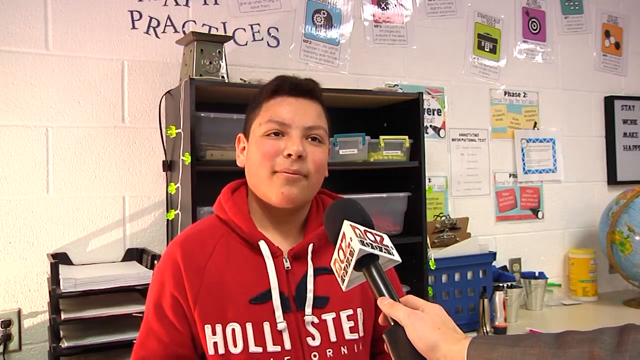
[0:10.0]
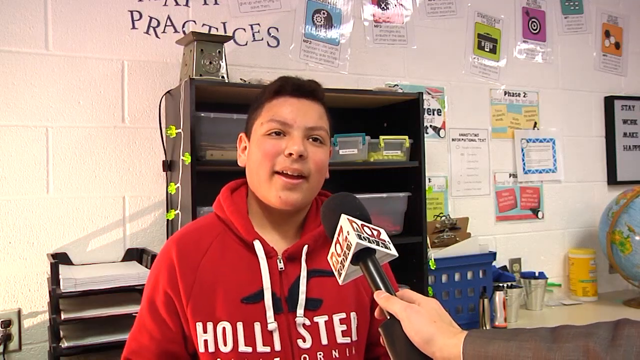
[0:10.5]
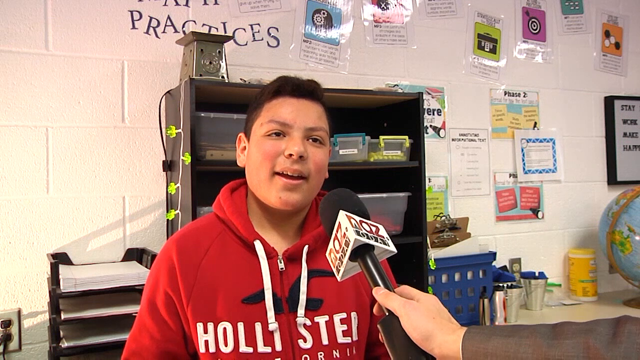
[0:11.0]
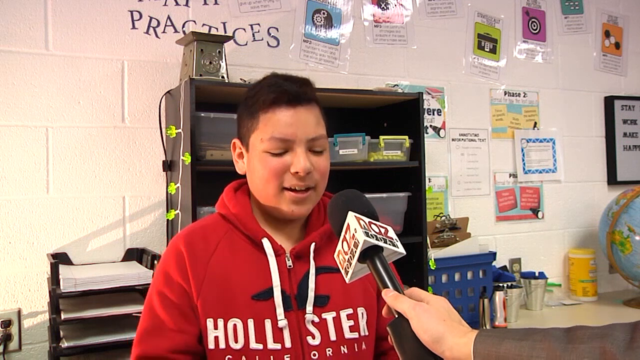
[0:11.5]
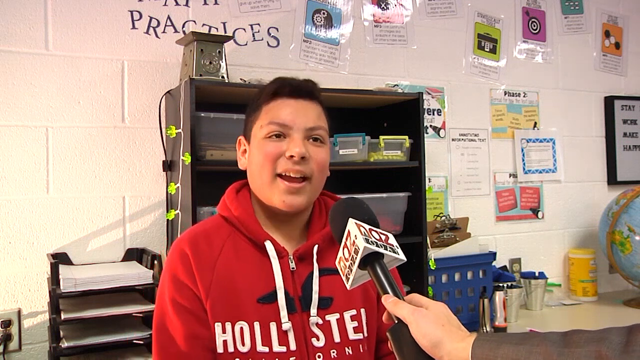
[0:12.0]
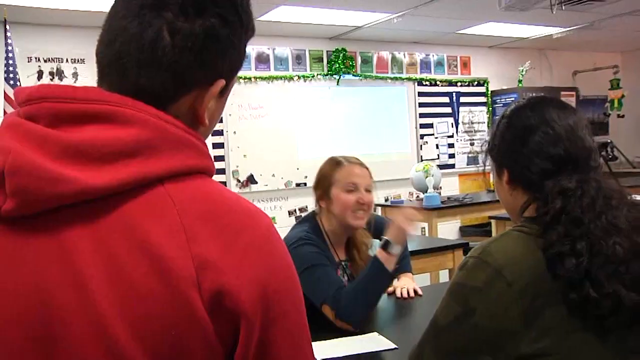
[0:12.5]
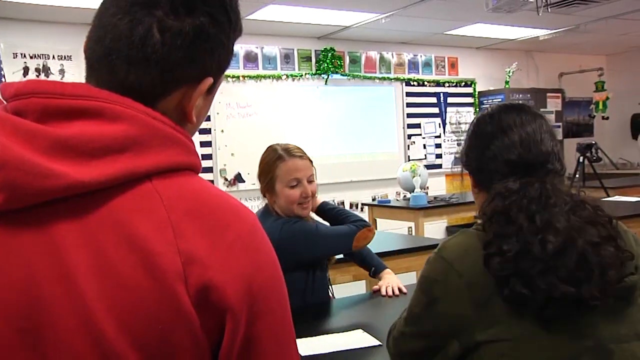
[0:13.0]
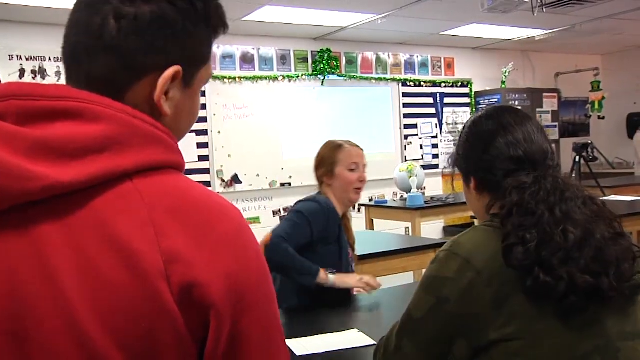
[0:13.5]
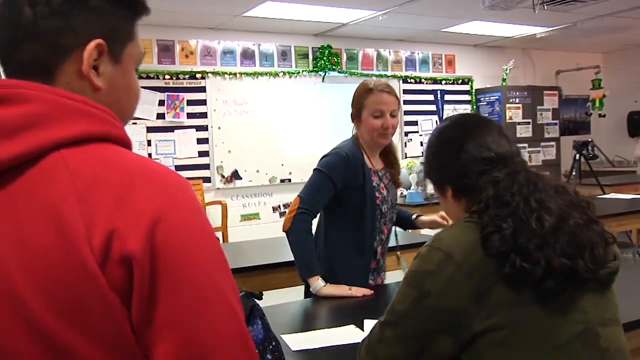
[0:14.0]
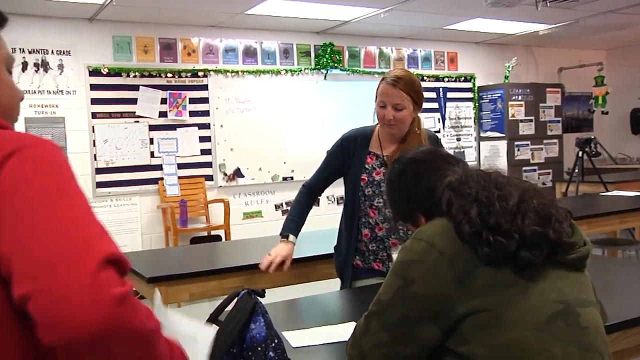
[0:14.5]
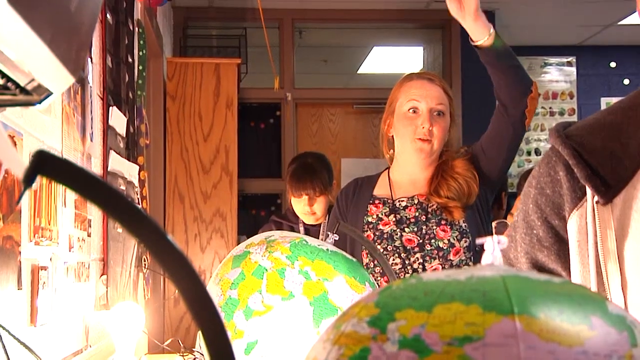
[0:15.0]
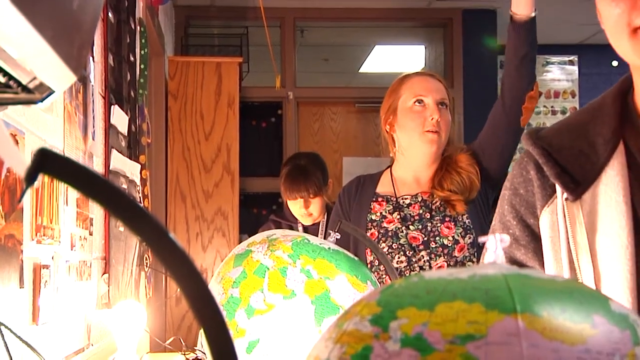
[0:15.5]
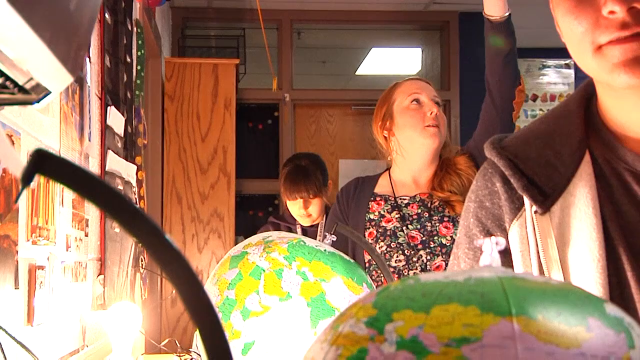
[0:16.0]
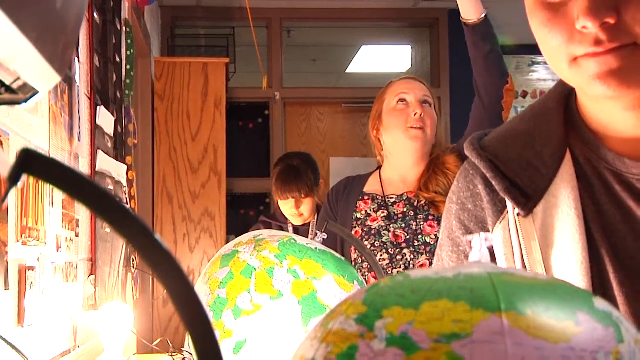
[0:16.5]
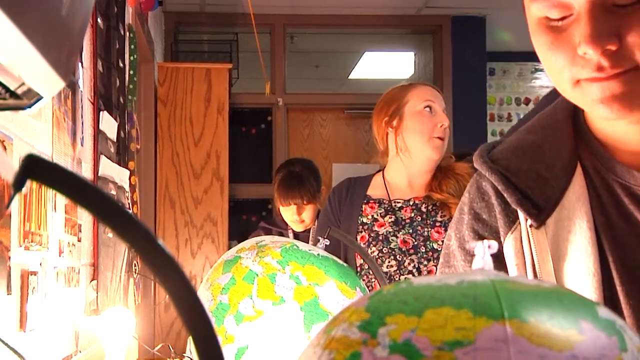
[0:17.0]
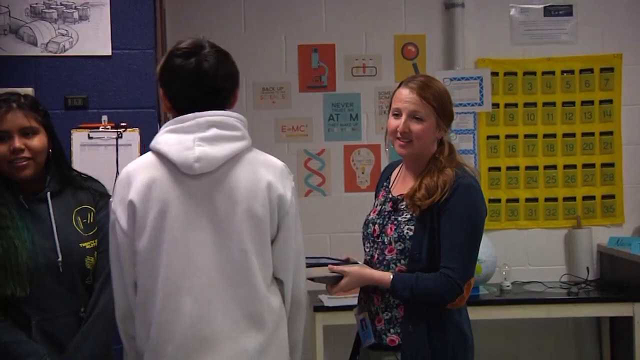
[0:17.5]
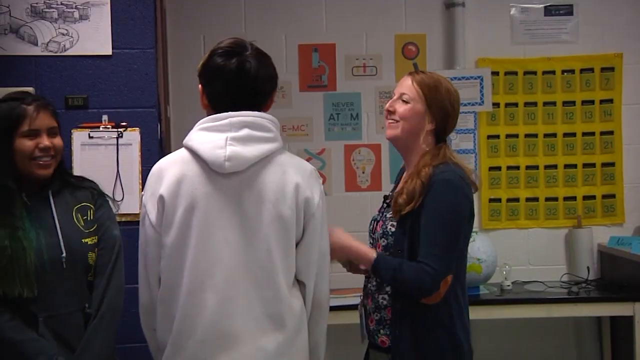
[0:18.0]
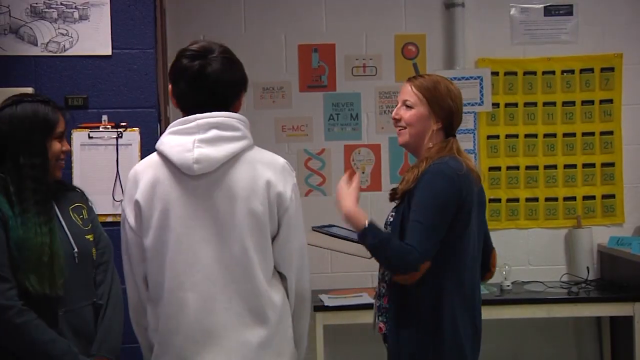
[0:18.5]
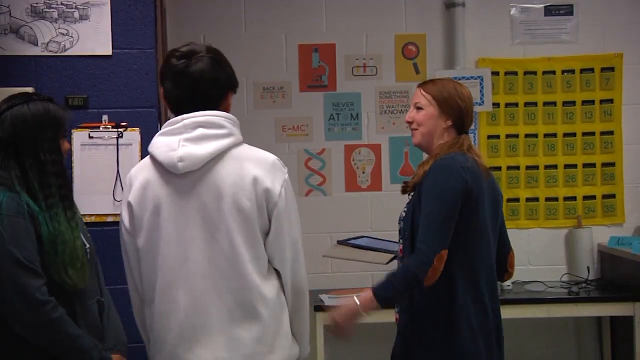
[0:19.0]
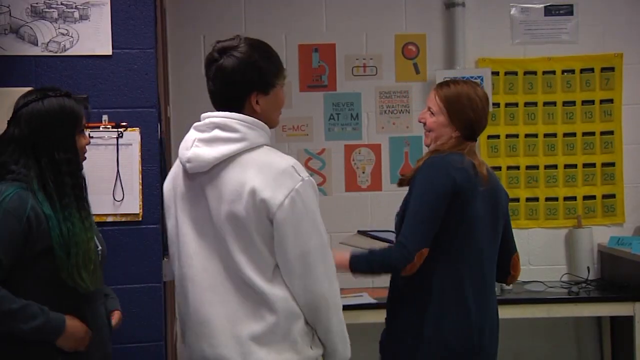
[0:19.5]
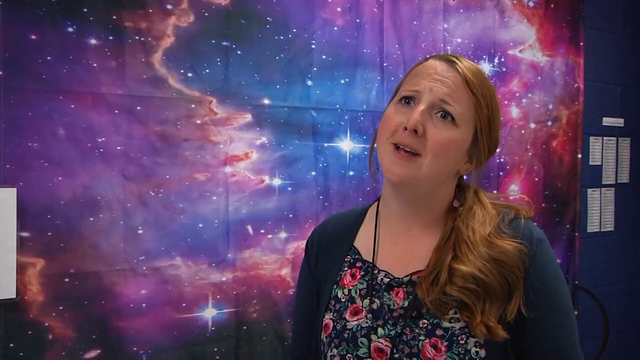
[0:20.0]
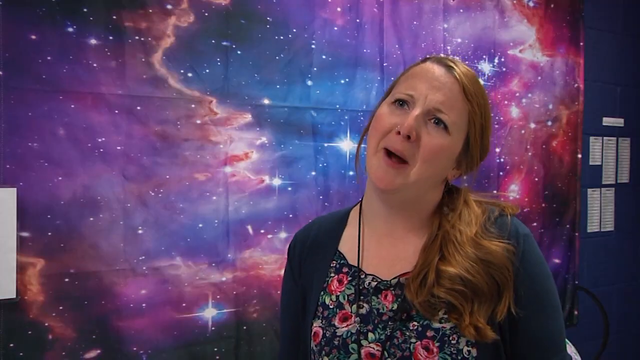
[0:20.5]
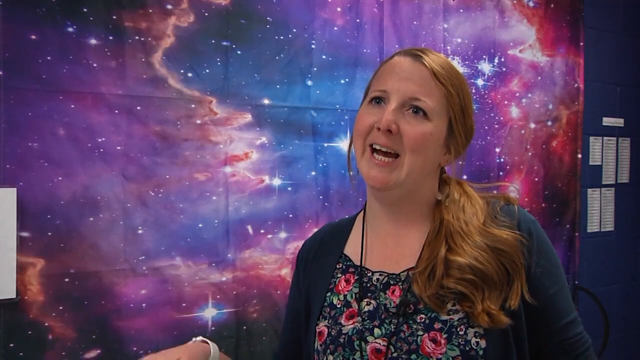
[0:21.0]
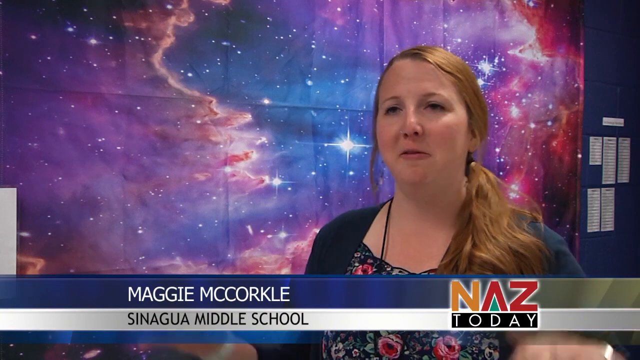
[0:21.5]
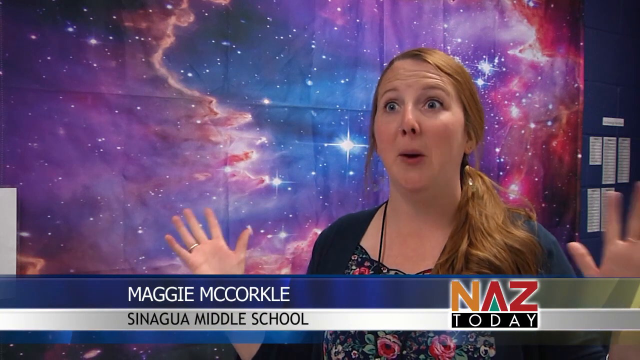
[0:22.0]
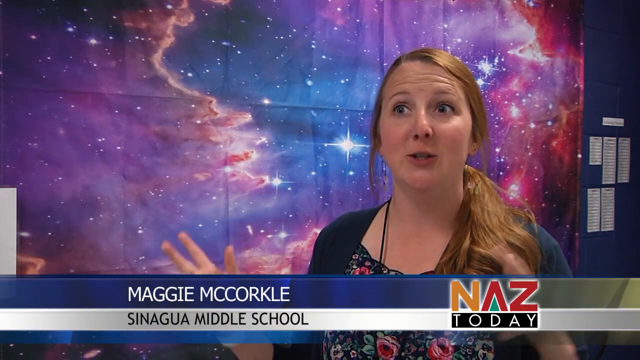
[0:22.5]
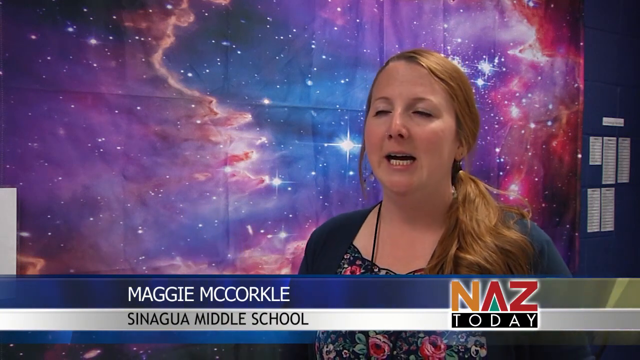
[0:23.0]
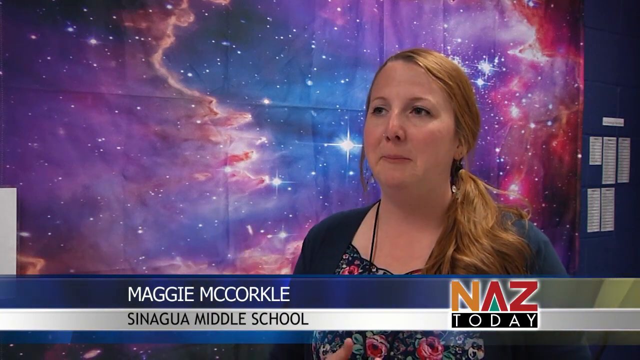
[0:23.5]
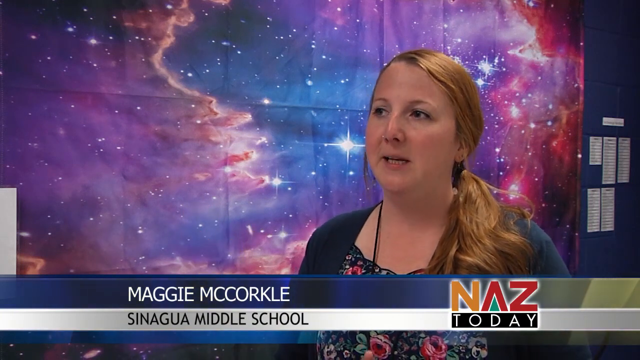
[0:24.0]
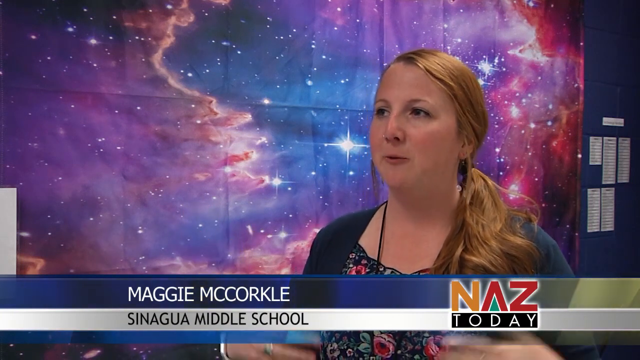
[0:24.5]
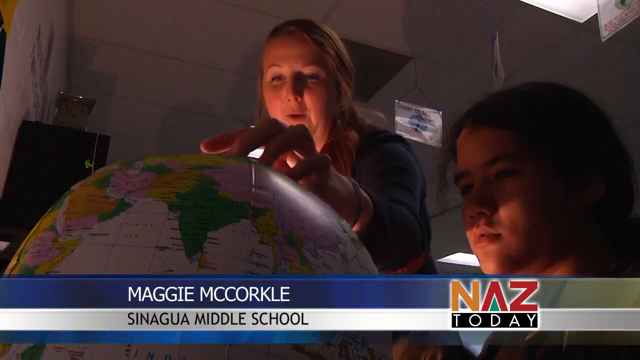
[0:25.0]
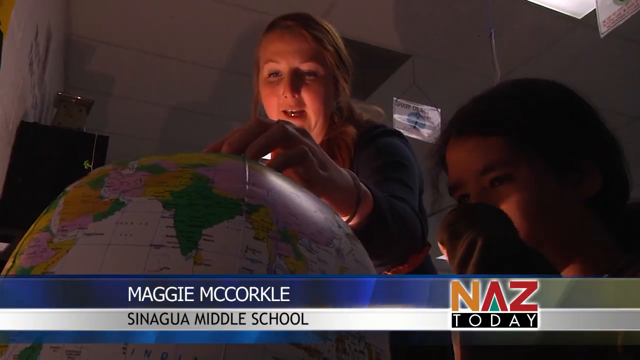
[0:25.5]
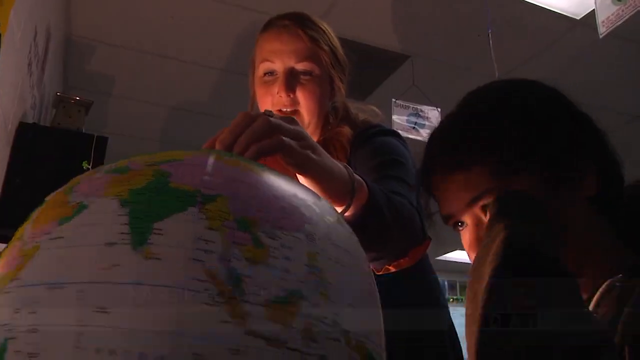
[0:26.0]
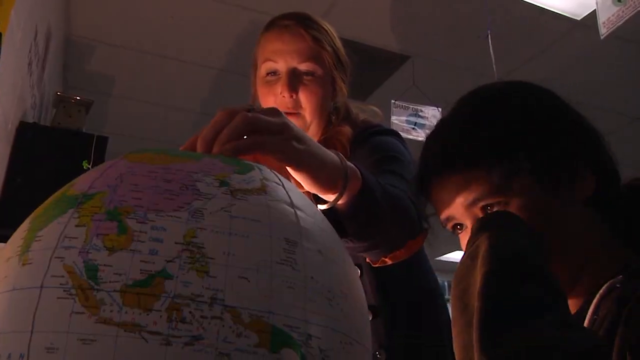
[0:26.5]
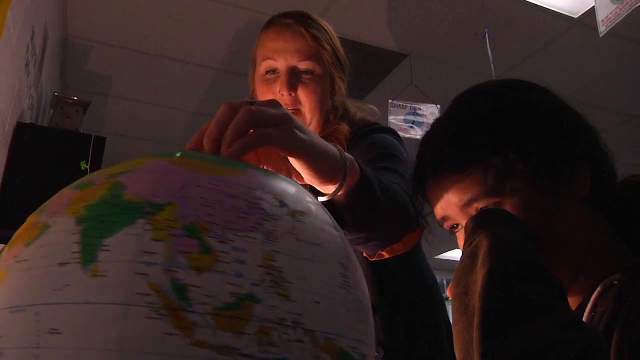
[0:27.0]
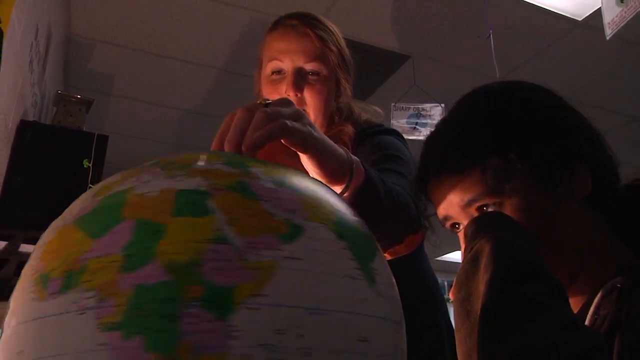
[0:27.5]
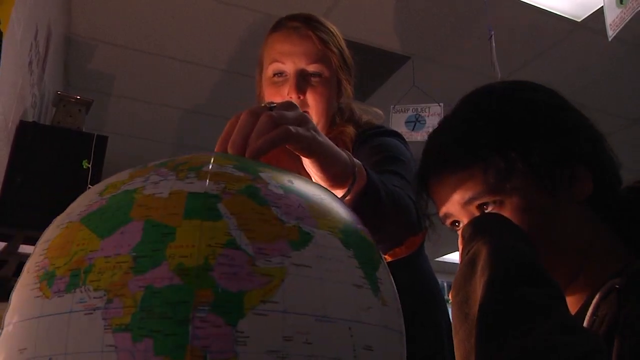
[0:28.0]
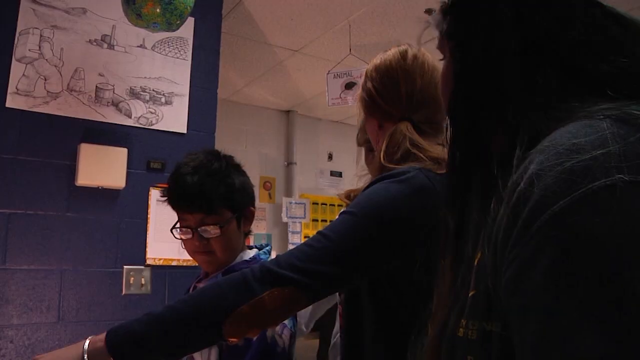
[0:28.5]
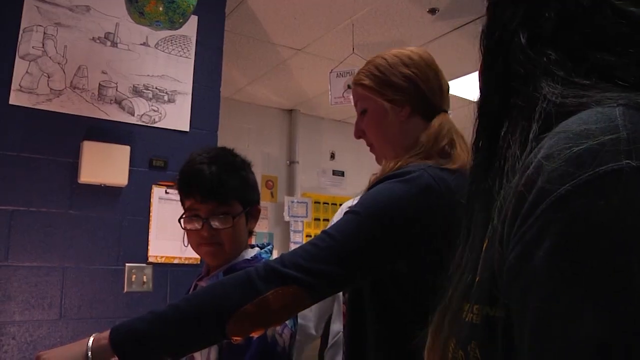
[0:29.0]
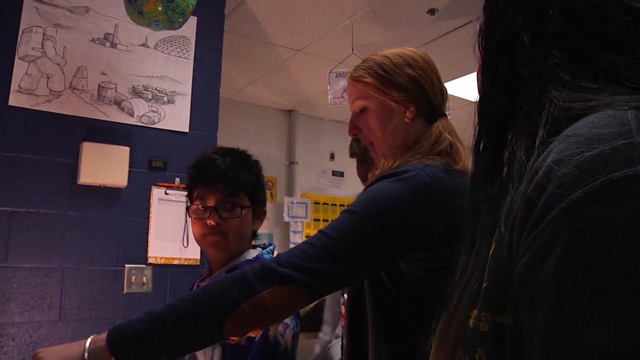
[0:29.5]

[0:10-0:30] A young male with black hair wearing a red hoodie is being interviewed, a black microphone in front of his face as he begins to talk. Behind him is a white wall with a cabinet in front of it. The scene shifts to three students talking amongst themselves, and one of them stands up. The student who stood up is then in a room with multiple globes and two other students, one behind her and one in front of her; she points her hands to the roof as she gestures and speaks. A side view shows the three students continuing to talk. Then she is shown speaking in front of a poster of a galaxy with twinkling stars, and a caption appears underneath her stating her name is Maggie McCockle of Sinagau Middle School and that it is being reported by NAS Today. She continues talking while gesturing with her hands. The scene shifts to her with another student as she rotates a globe.